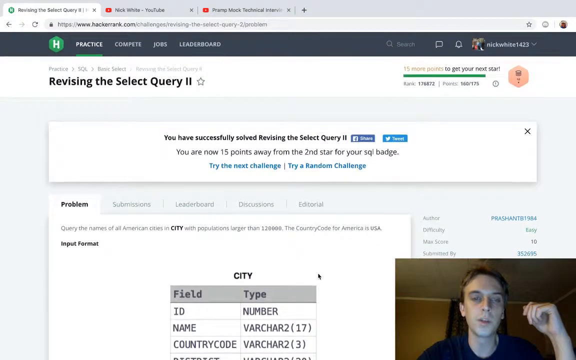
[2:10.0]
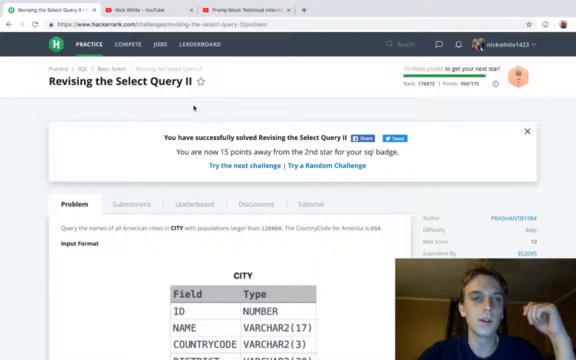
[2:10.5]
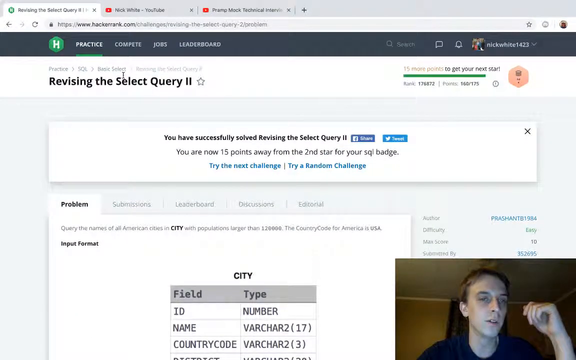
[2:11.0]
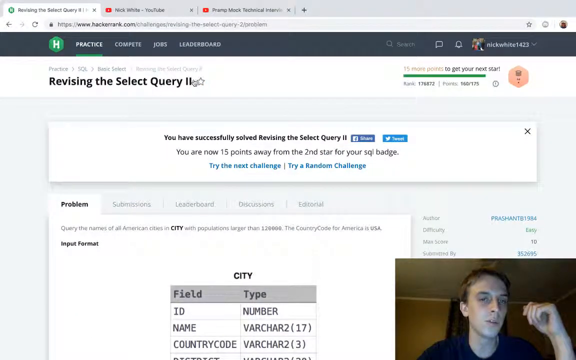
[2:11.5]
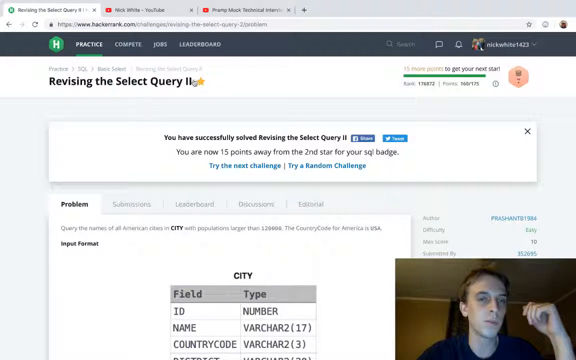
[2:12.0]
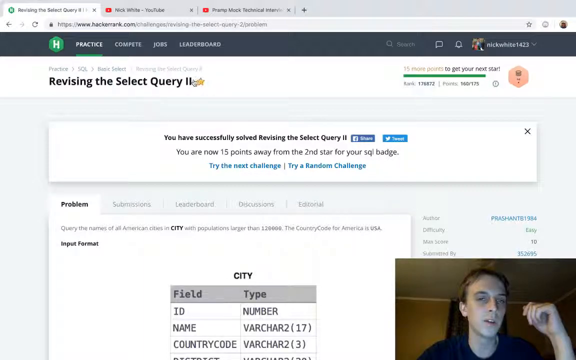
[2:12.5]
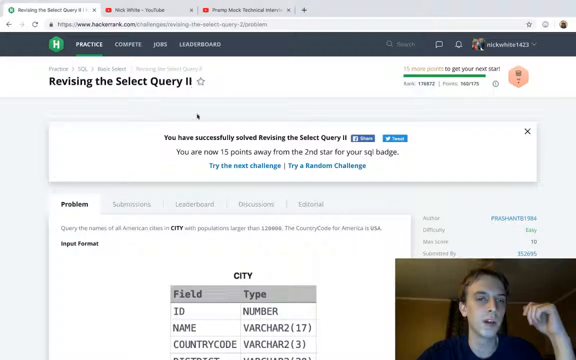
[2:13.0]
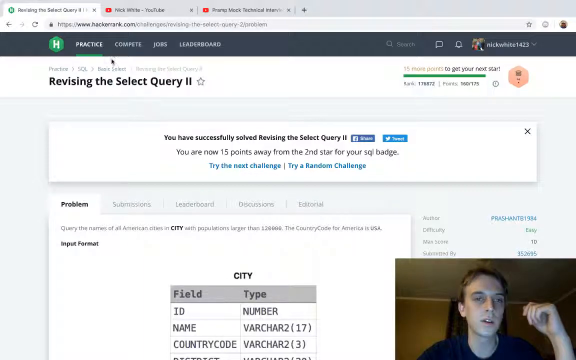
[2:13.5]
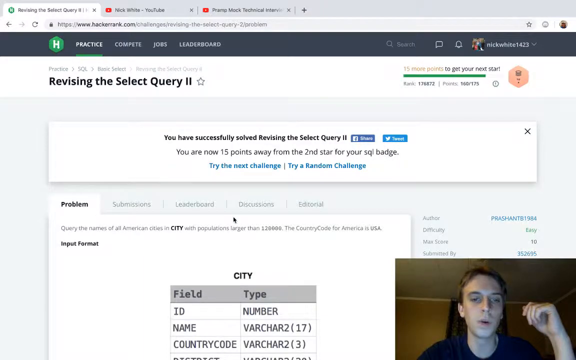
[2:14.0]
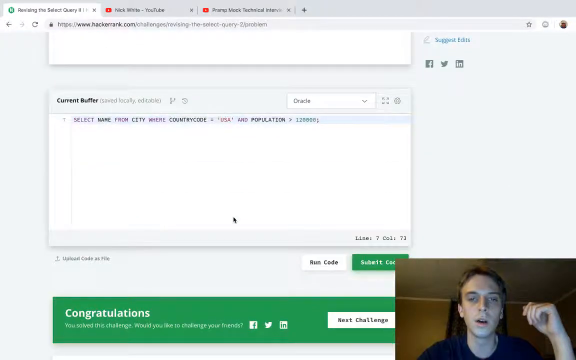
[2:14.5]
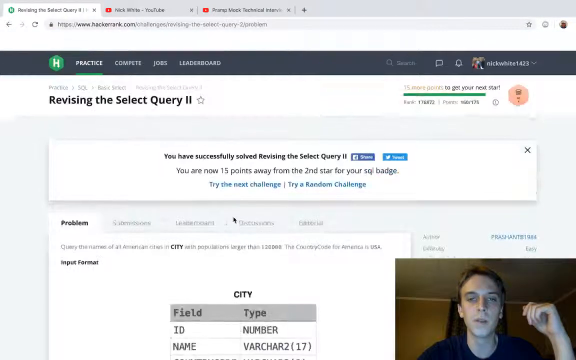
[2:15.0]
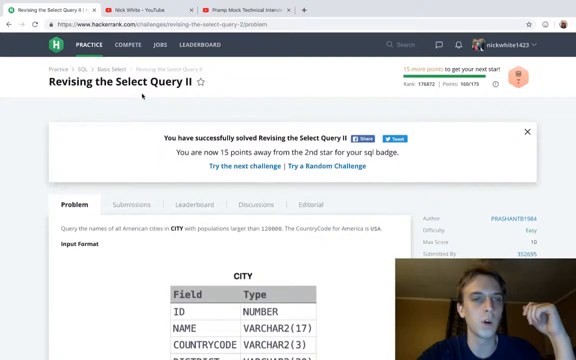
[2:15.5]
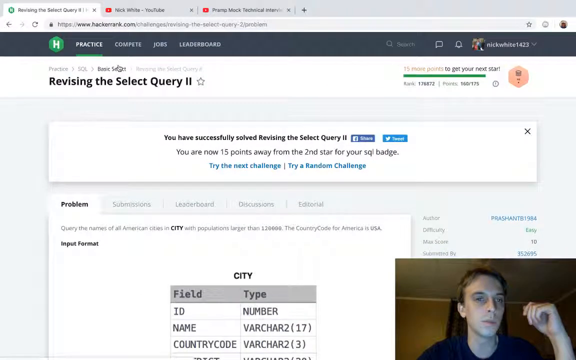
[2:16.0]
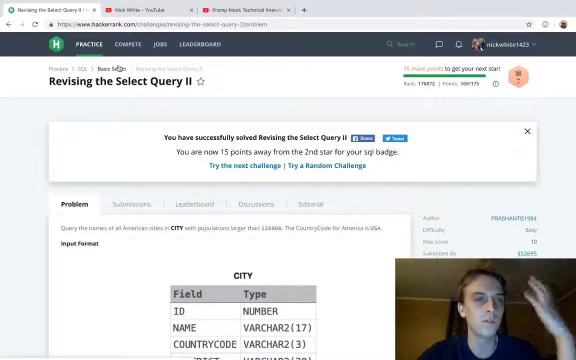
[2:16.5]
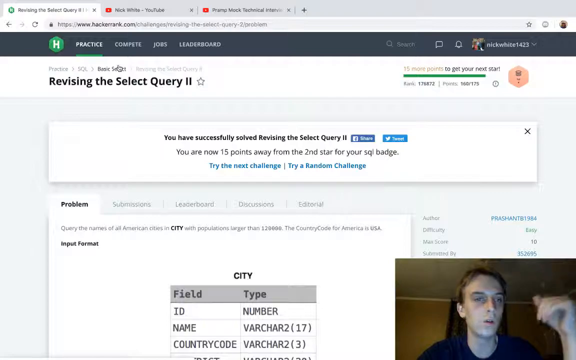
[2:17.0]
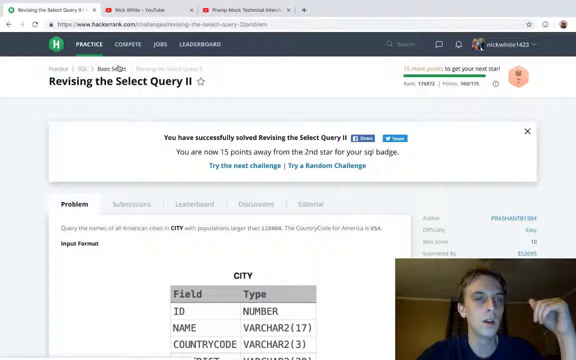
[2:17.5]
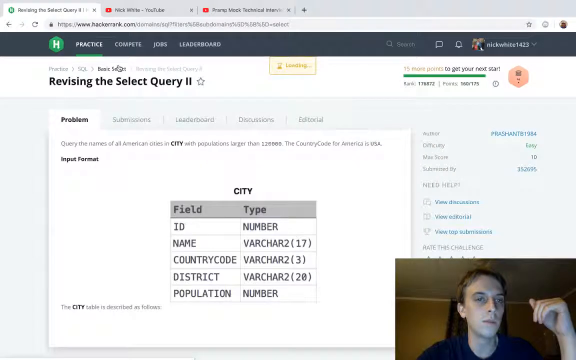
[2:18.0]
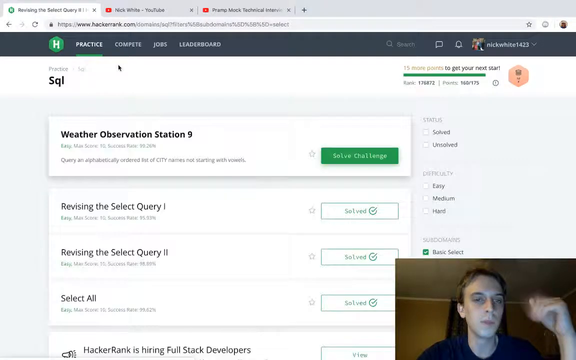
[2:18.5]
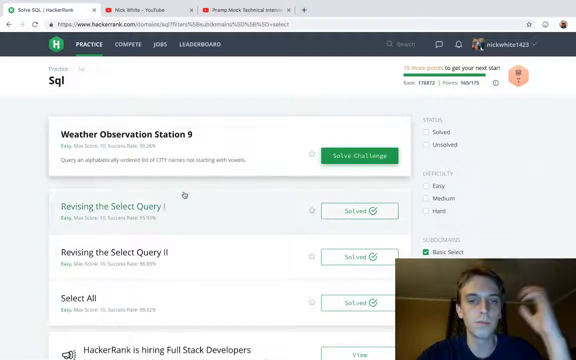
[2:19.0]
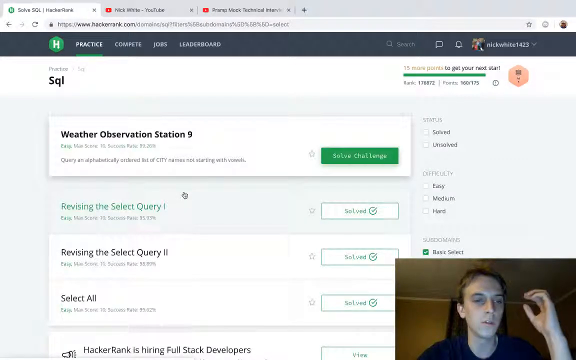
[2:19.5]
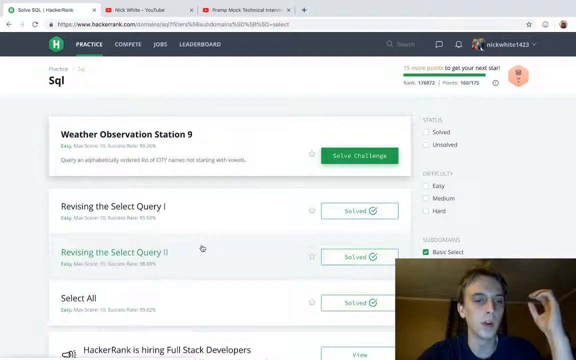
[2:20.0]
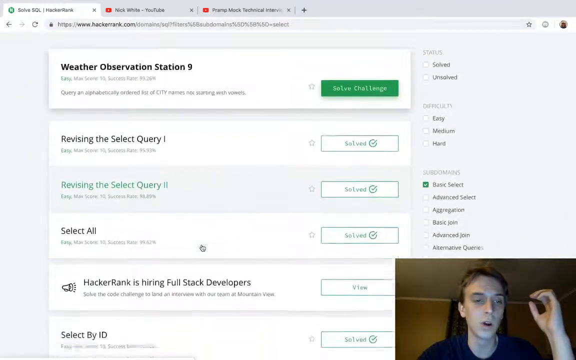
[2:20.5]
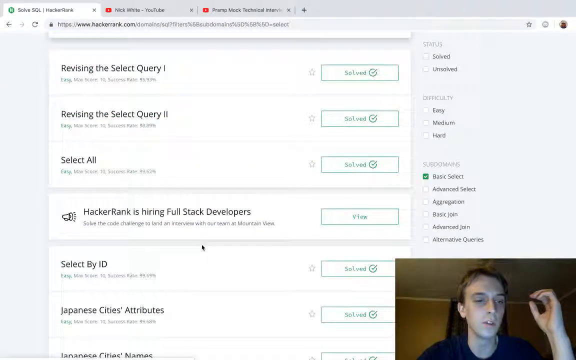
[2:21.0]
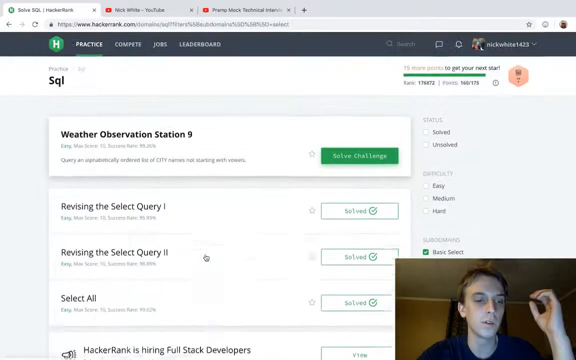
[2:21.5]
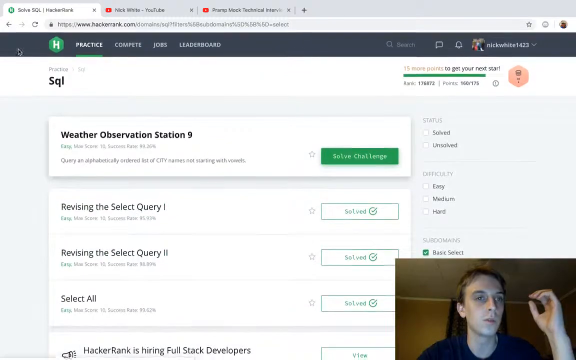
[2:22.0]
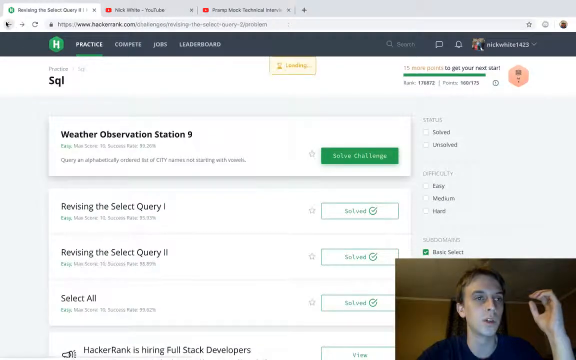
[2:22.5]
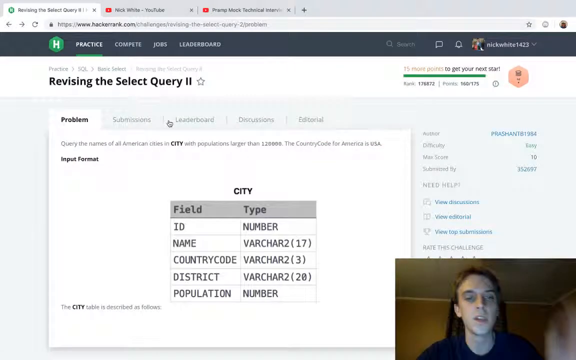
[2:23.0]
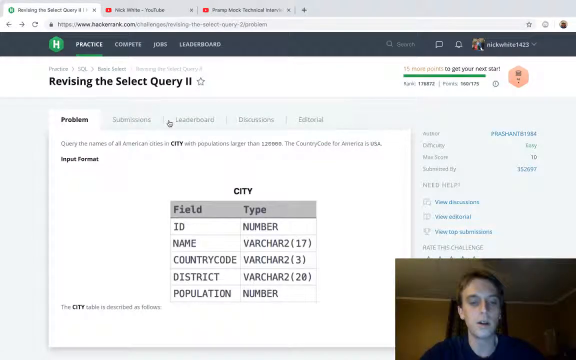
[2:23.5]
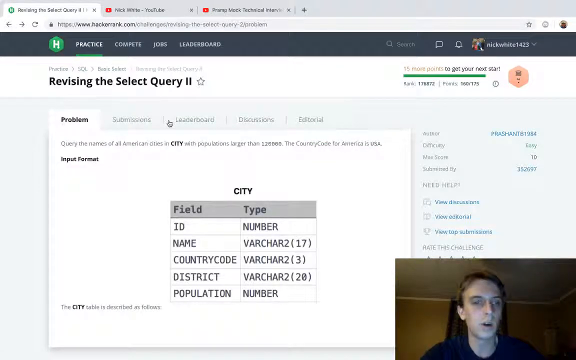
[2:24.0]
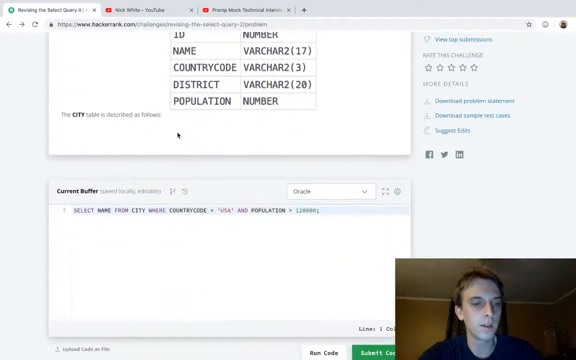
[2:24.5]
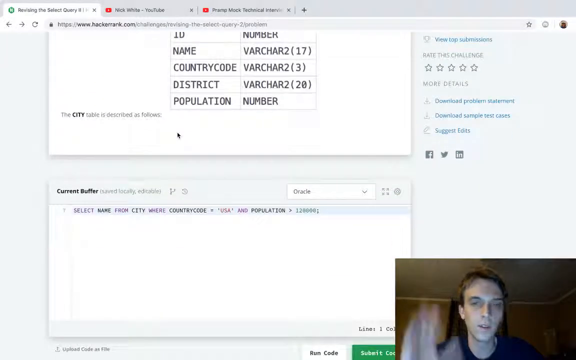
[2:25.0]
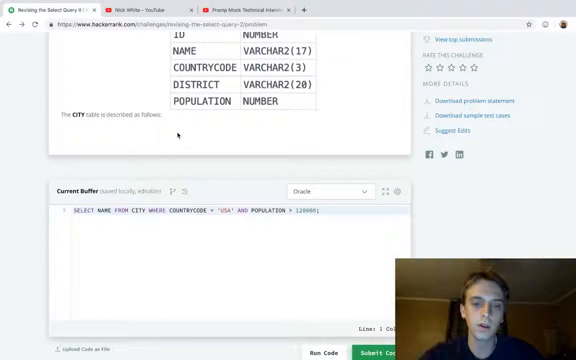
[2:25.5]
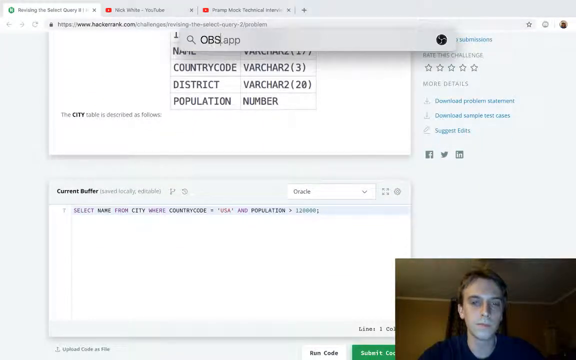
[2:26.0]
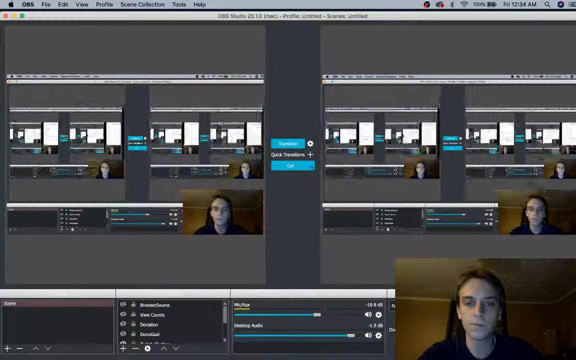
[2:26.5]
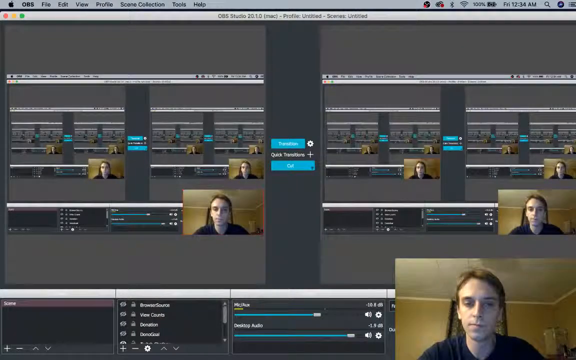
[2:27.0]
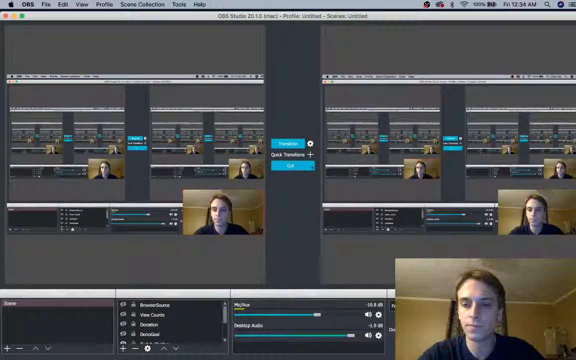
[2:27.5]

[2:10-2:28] The man scrolls up and down and goes back to the top of the page, where the tabs are visible. He clicks something that opens a new page, scrolls down it, then returns to the original page, apparently by clicking back; the page may be a practice tab. He then leaves this tab entirely and opens a tab showing himself being recorded, mirrored apparently about three times. He then closes the web browser, revealing the editing or live-streaming program recording him in the background, and the video ends.